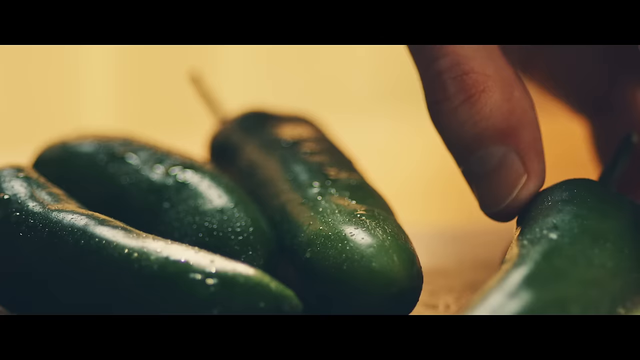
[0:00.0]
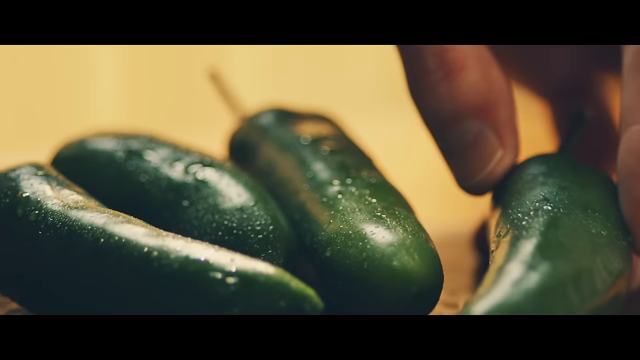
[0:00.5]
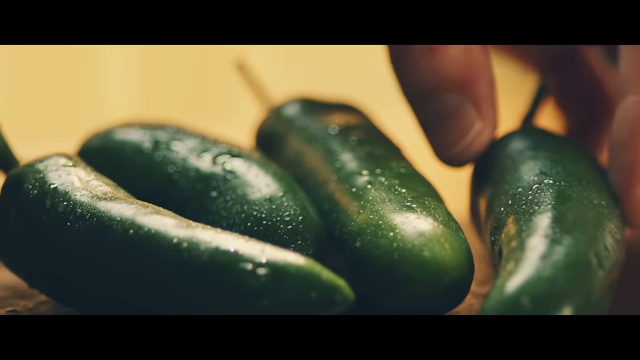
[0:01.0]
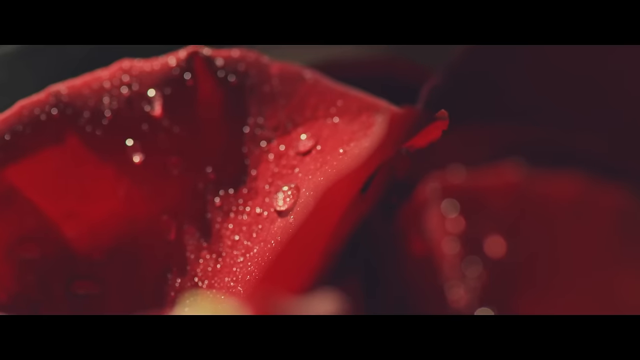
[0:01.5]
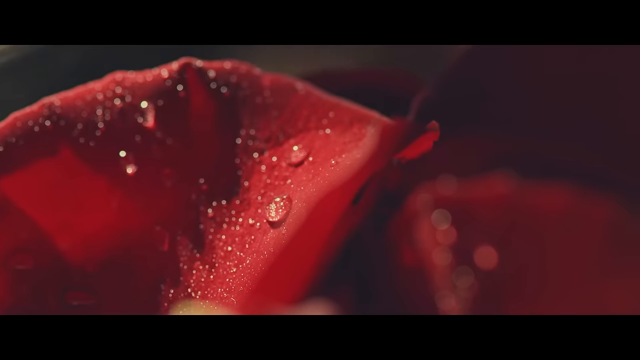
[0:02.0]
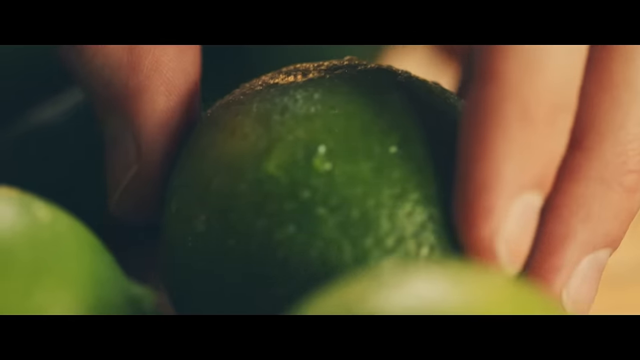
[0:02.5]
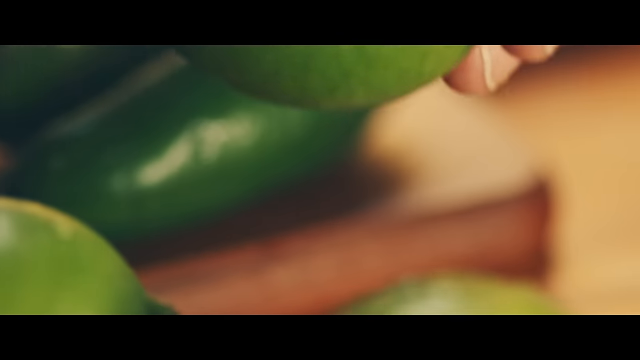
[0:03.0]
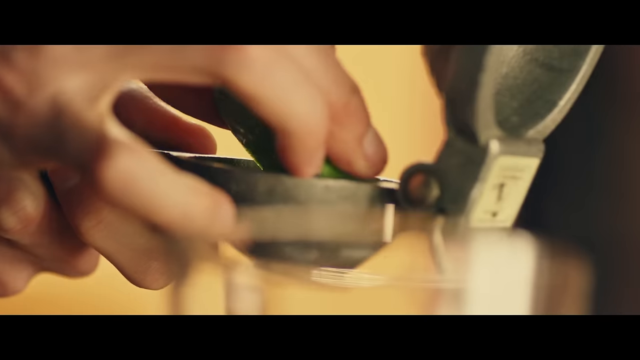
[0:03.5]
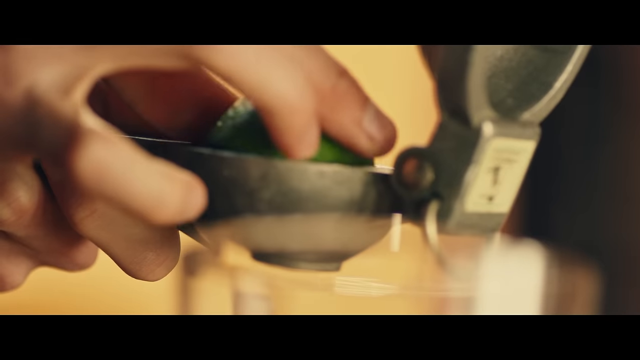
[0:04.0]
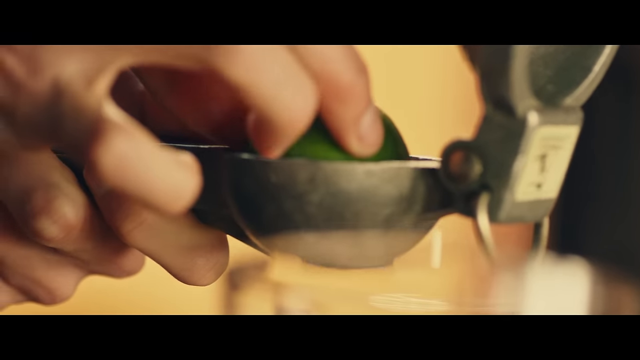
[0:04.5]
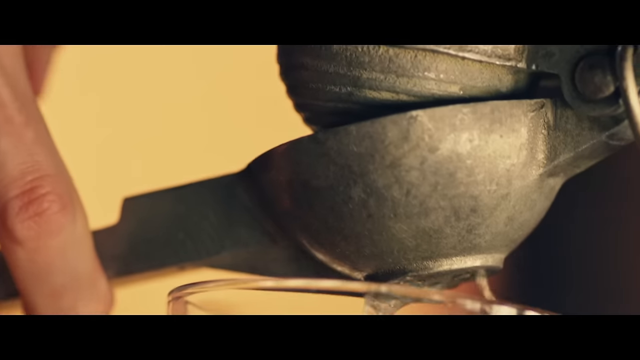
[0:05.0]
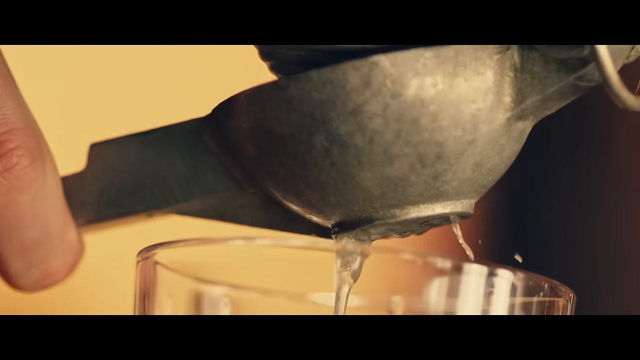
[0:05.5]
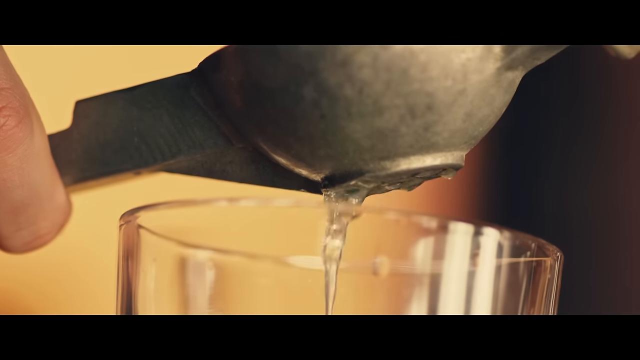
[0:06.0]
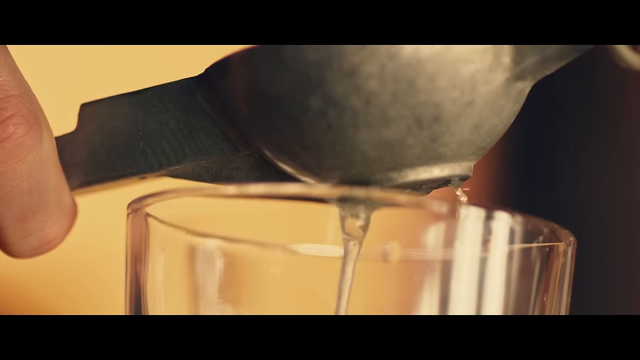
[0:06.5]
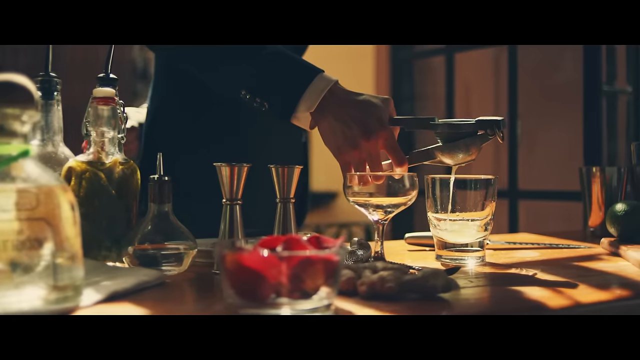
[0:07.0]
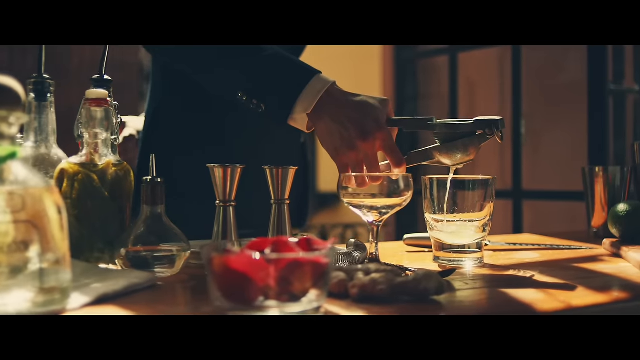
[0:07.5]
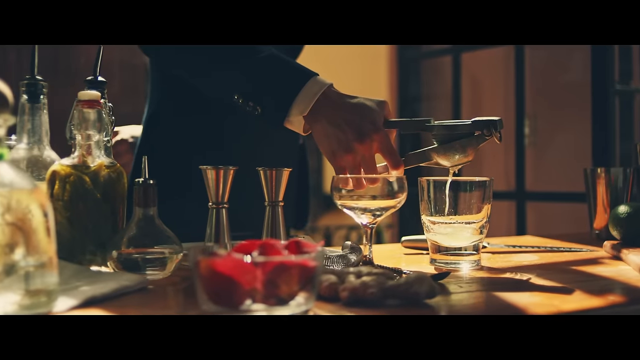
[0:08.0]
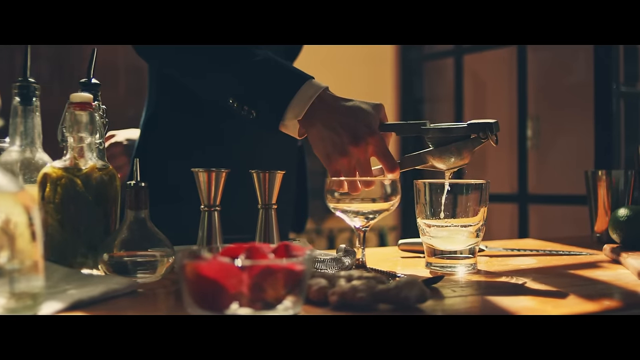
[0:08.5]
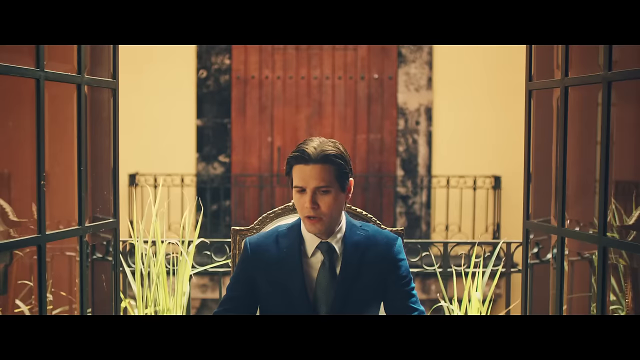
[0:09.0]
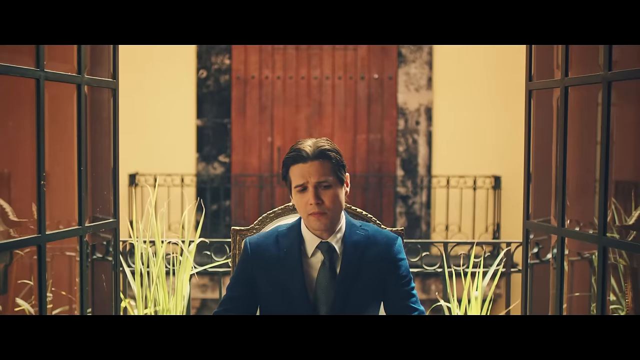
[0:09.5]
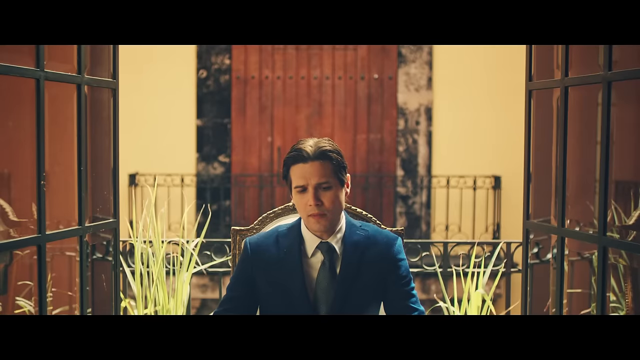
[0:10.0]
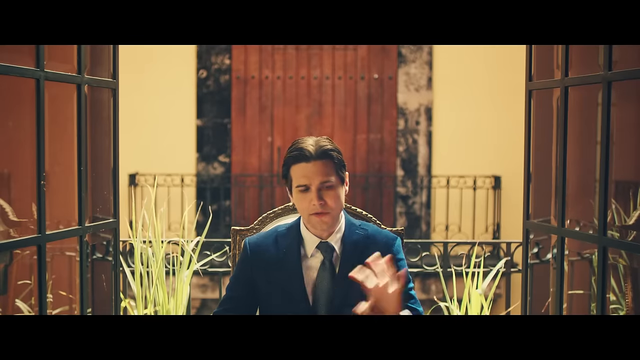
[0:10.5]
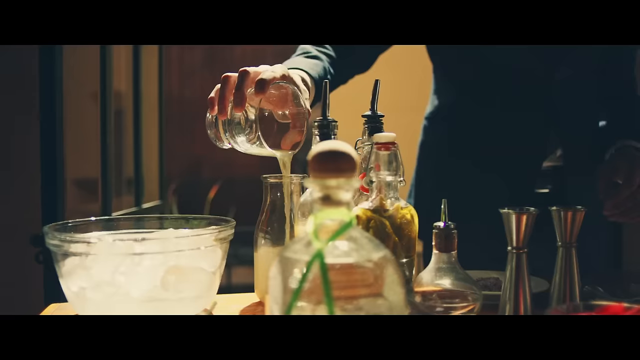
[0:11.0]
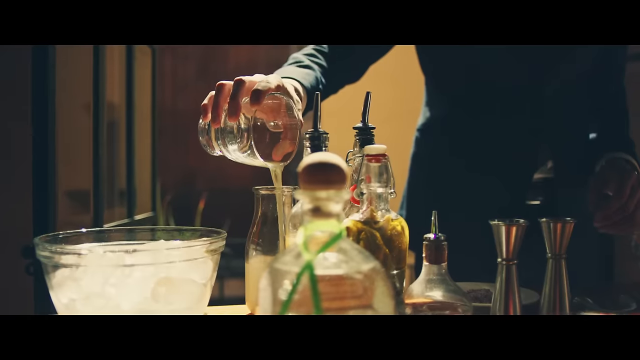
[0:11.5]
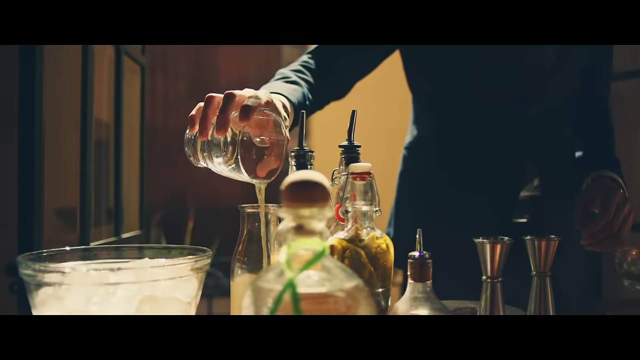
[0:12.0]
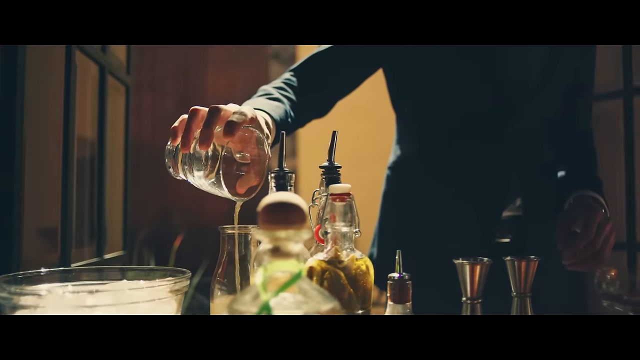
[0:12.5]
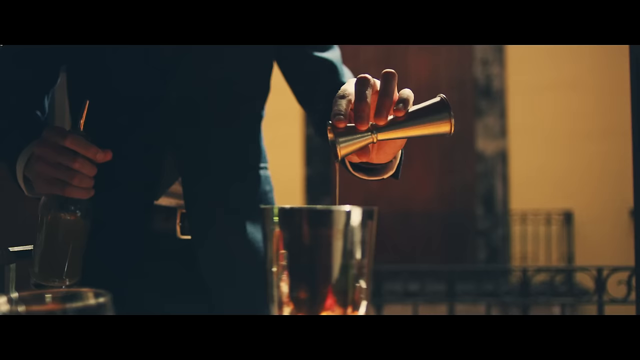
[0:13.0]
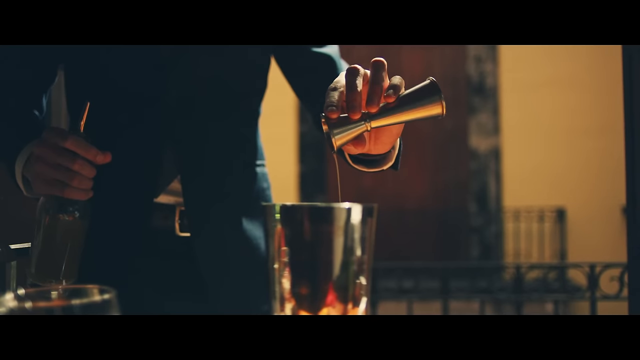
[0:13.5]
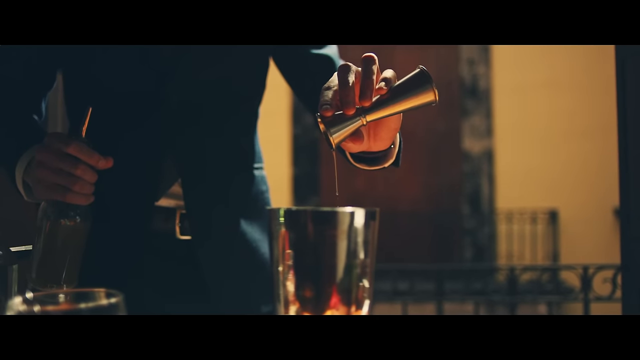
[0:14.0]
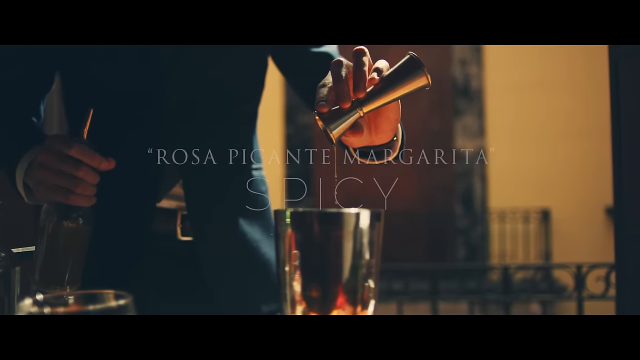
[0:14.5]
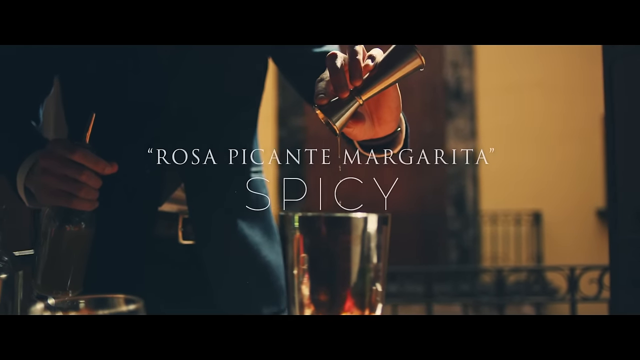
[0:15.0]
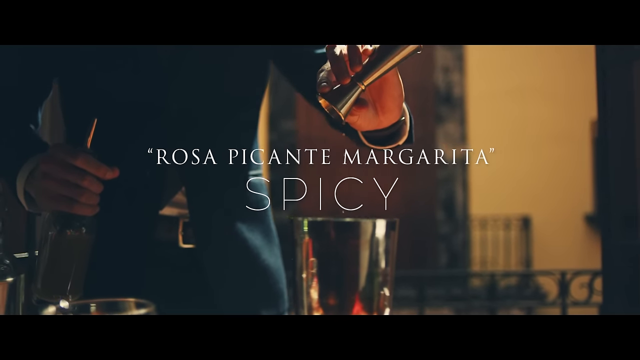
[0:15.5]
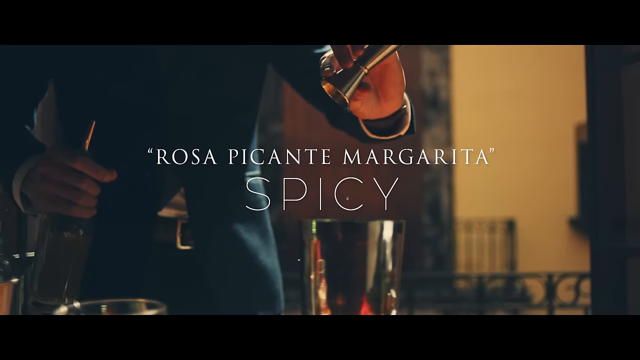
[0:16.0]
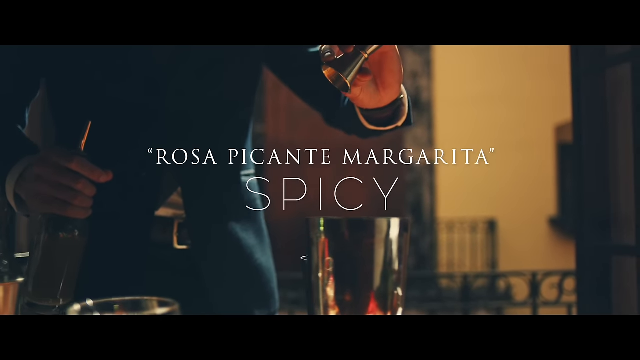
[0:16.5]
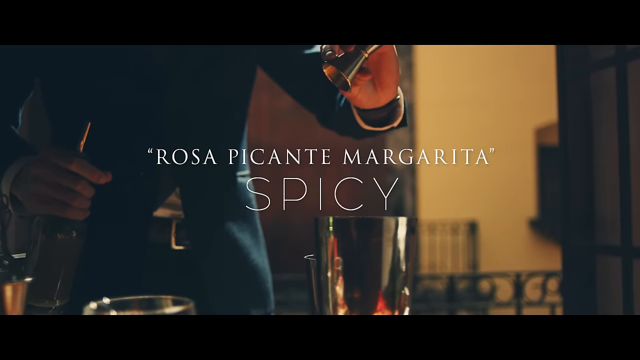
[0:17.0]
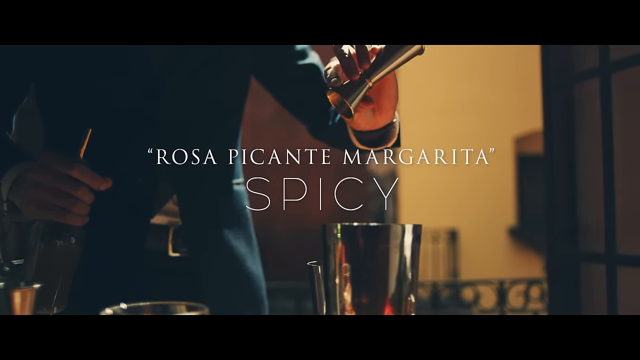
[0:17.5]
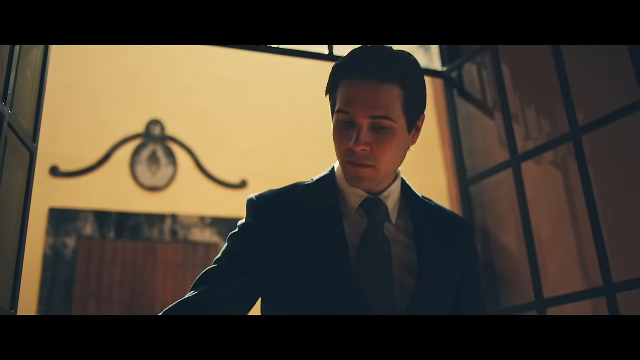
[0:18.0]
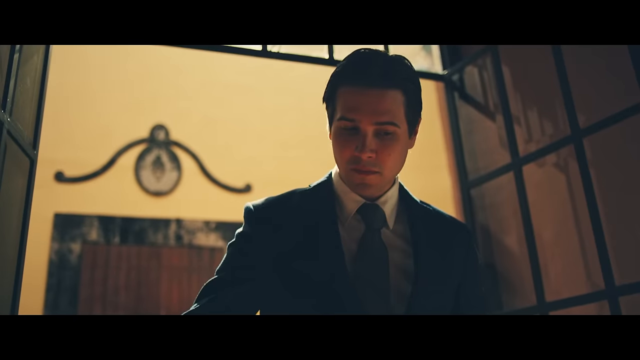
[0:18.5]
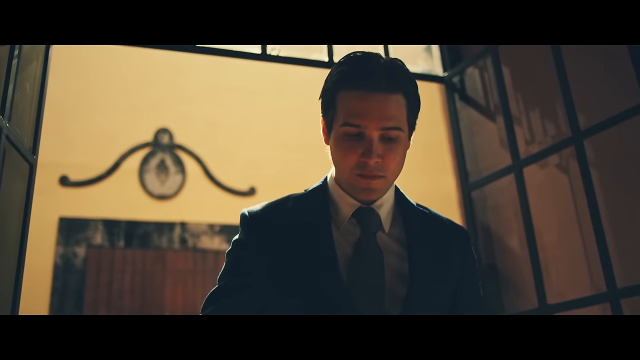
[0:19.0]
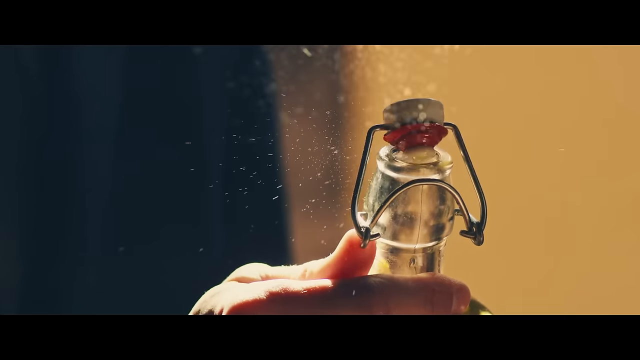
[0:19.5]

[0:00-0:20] Fruits and vegetables are on display, including very green cucumbers that are fairly small. A lime is squeezed into a glass for a drink. There are also peppers, apparently jalapeños, so the drink is probably some sort of jalapeño and lime drink. A man with slicked-back dark brown hair, wearing a darker blue suit with a white shirt and a tie, sits at the table, apparently getting ready either to taste the drink or to serve it to others. He talks while enjoying the drink. The man making the drink has very clean hands.